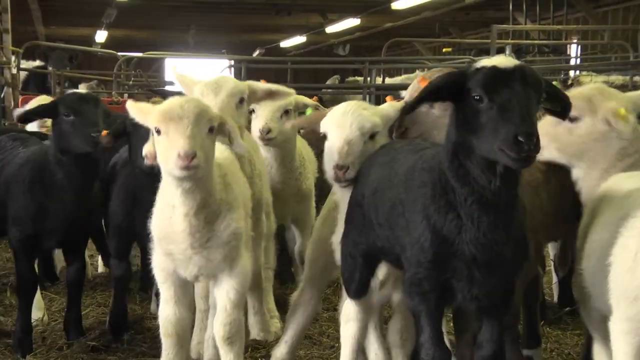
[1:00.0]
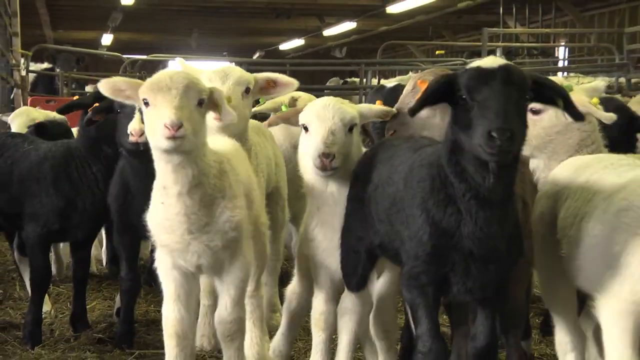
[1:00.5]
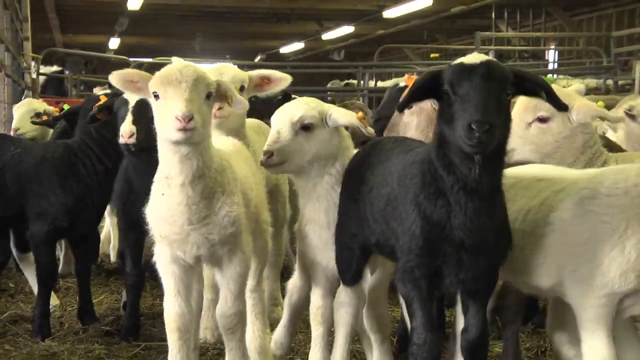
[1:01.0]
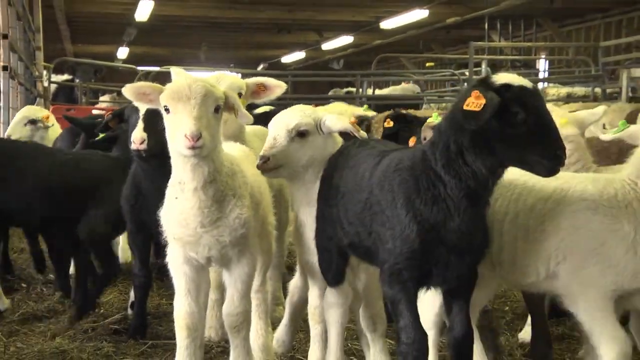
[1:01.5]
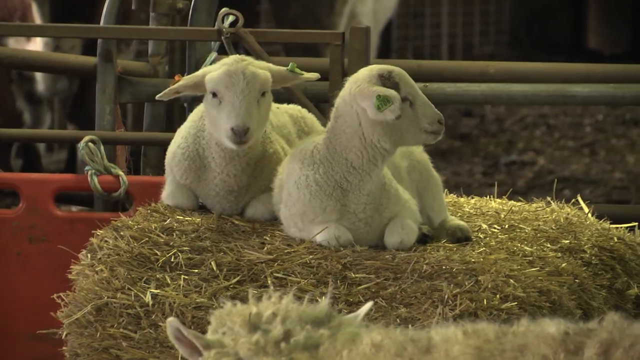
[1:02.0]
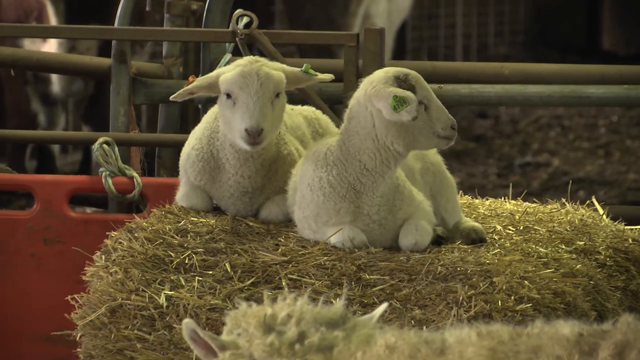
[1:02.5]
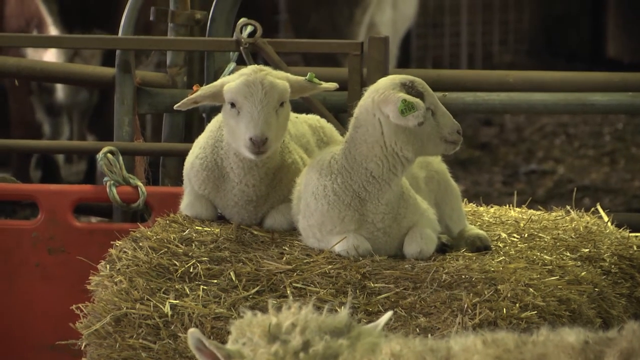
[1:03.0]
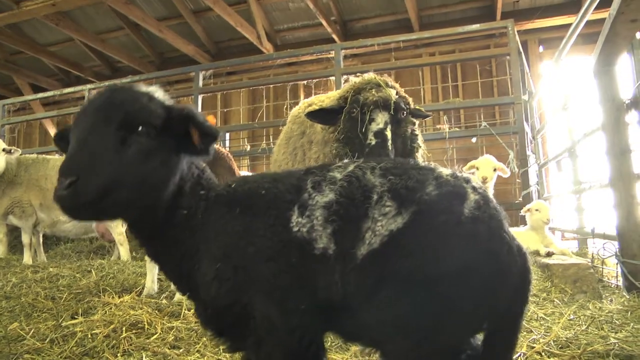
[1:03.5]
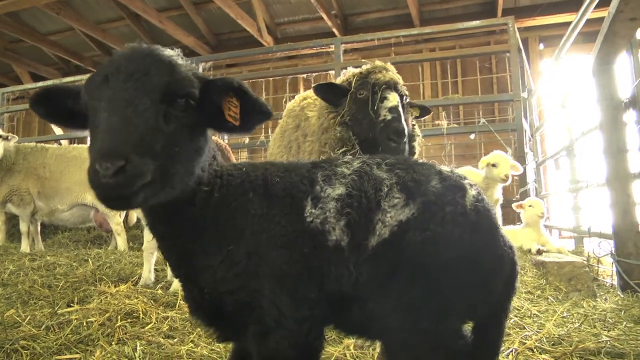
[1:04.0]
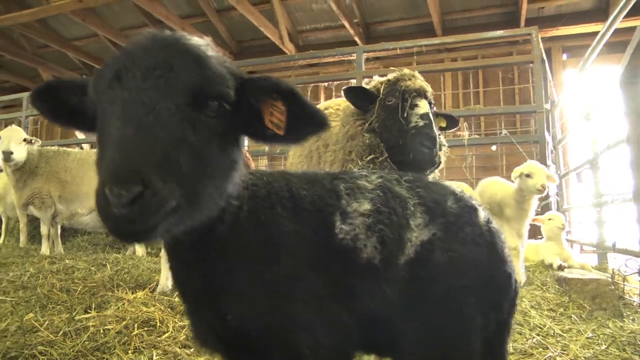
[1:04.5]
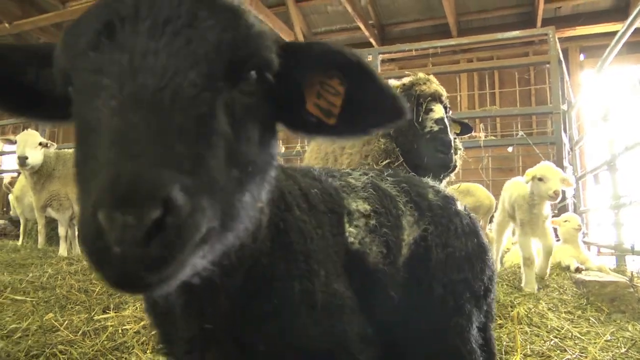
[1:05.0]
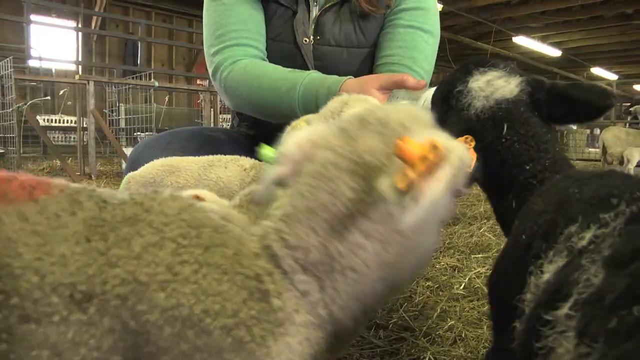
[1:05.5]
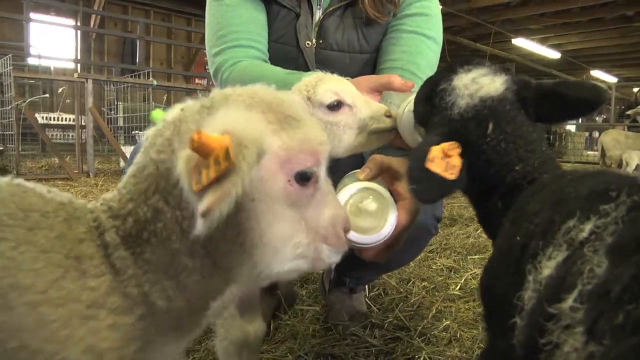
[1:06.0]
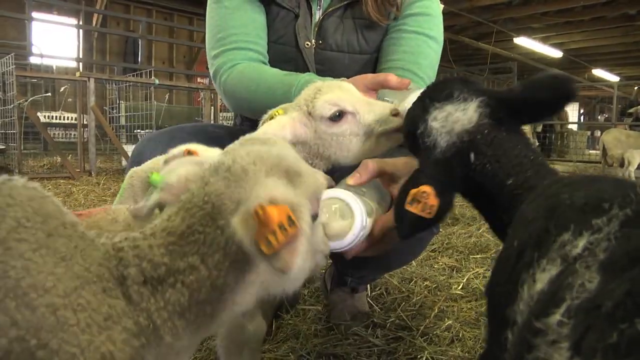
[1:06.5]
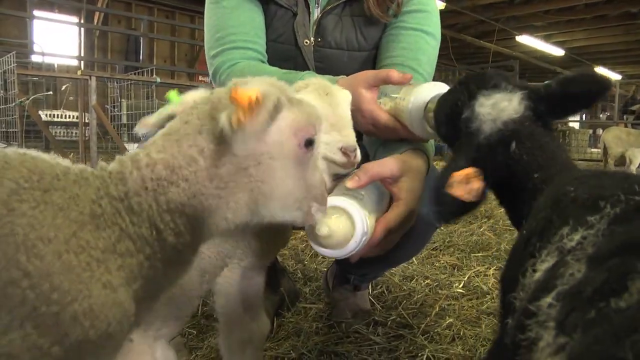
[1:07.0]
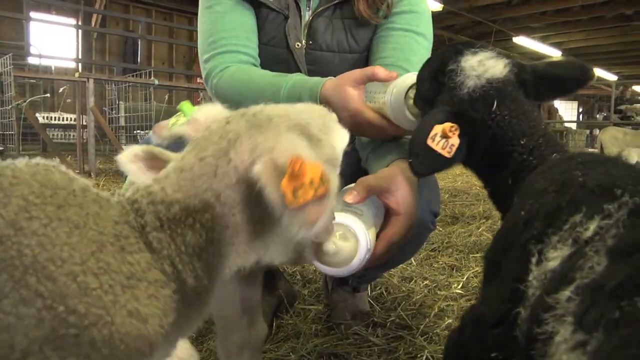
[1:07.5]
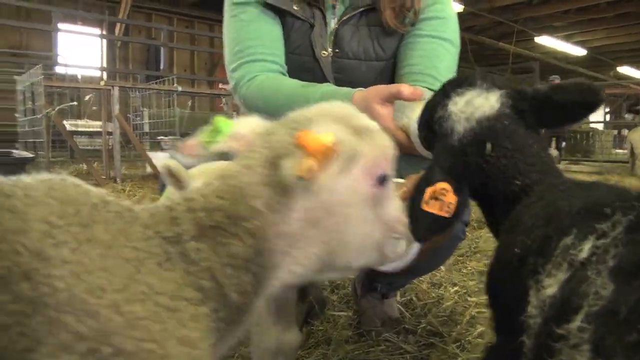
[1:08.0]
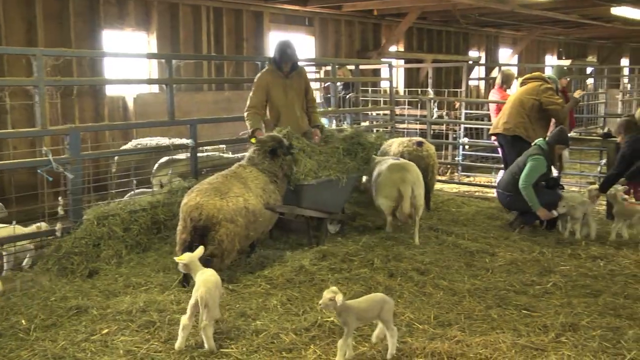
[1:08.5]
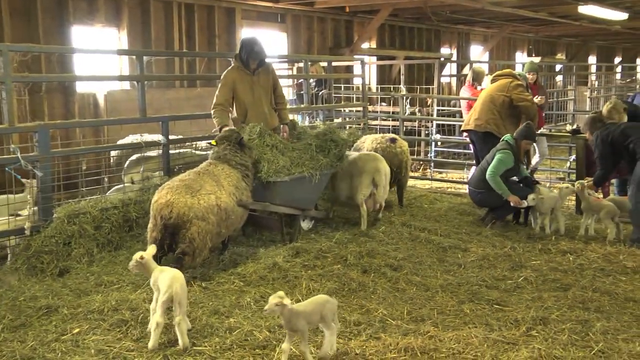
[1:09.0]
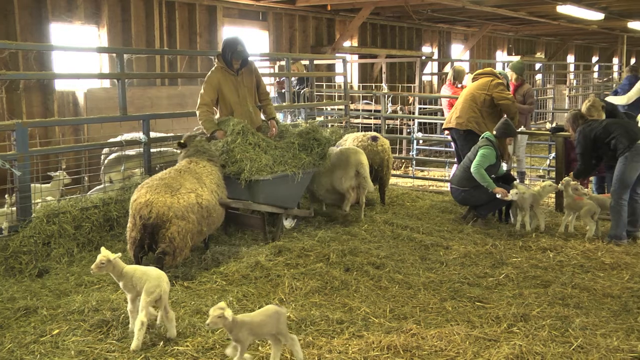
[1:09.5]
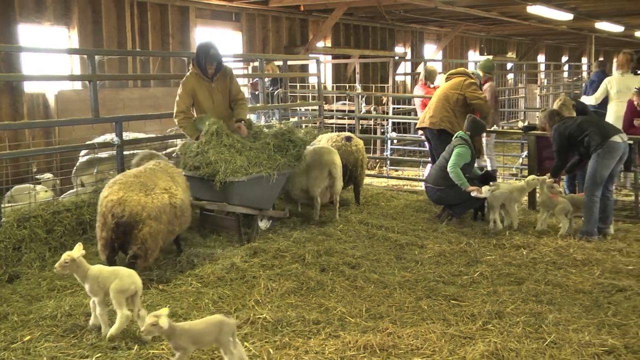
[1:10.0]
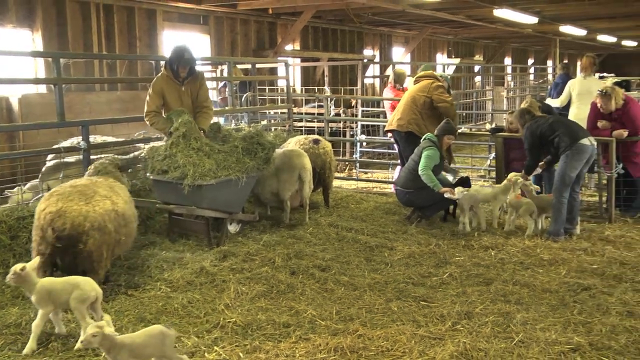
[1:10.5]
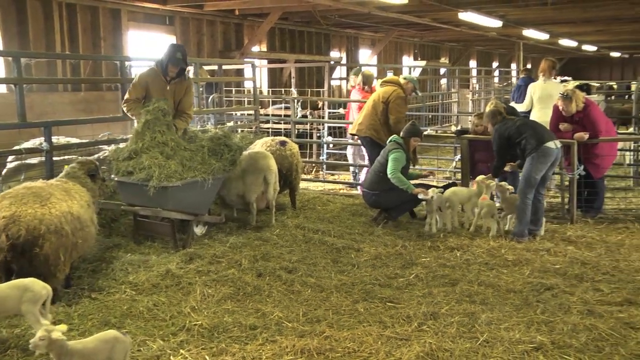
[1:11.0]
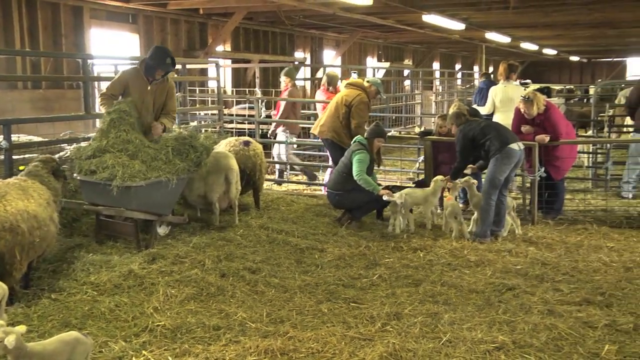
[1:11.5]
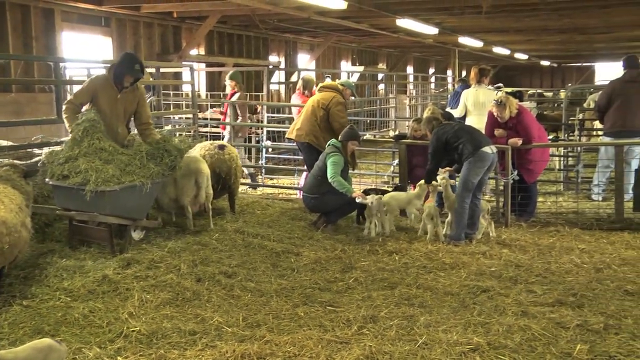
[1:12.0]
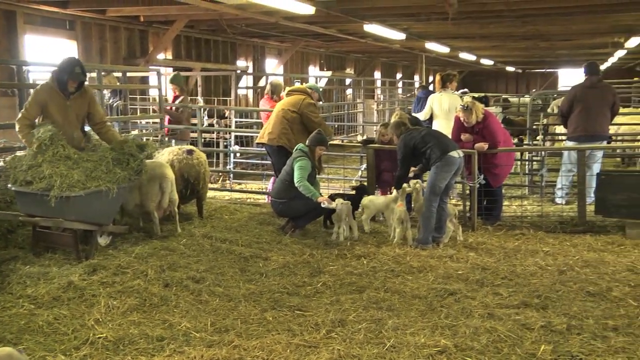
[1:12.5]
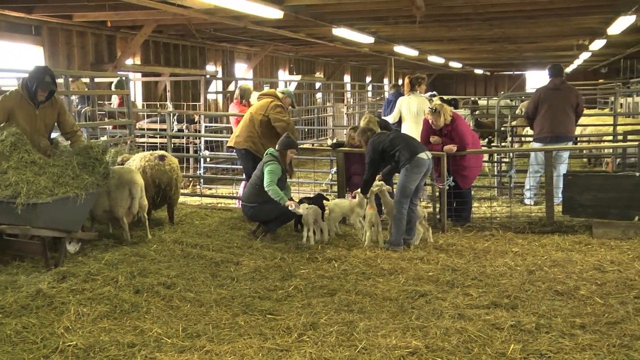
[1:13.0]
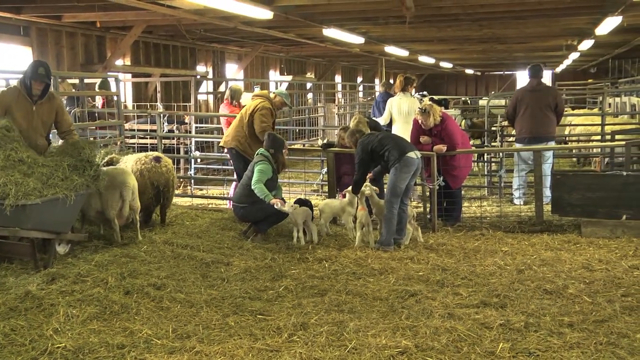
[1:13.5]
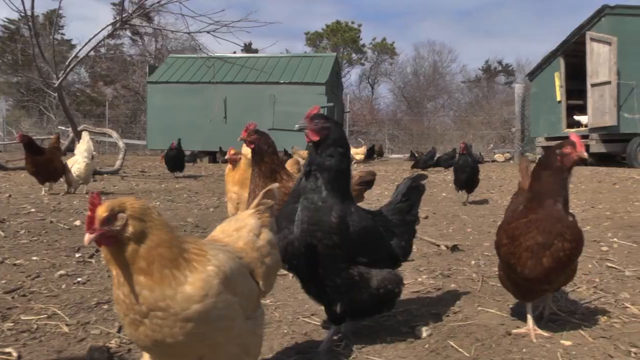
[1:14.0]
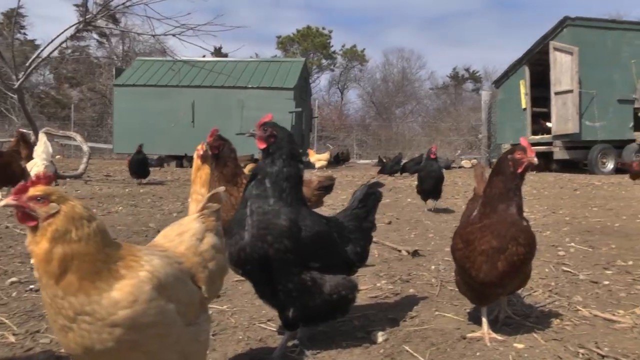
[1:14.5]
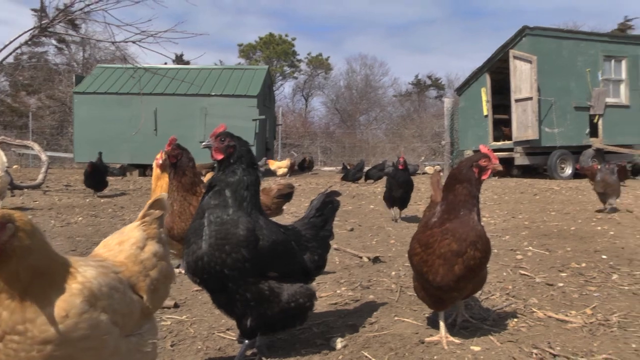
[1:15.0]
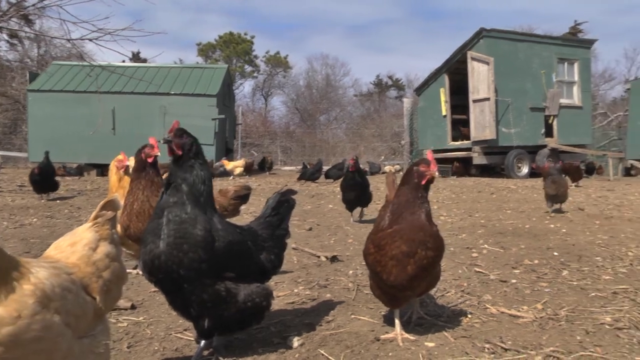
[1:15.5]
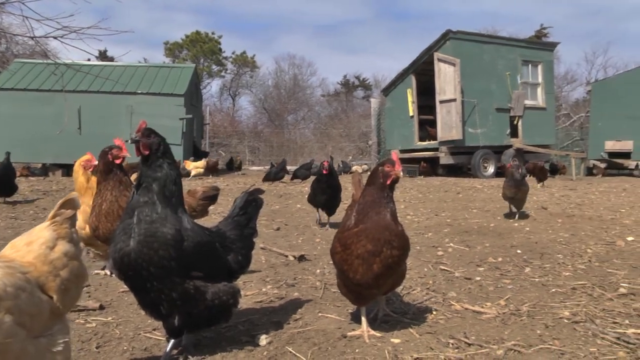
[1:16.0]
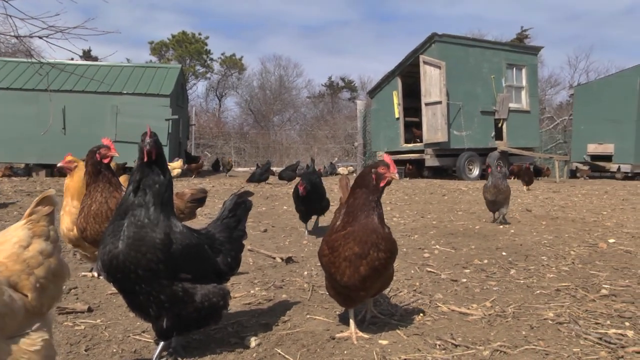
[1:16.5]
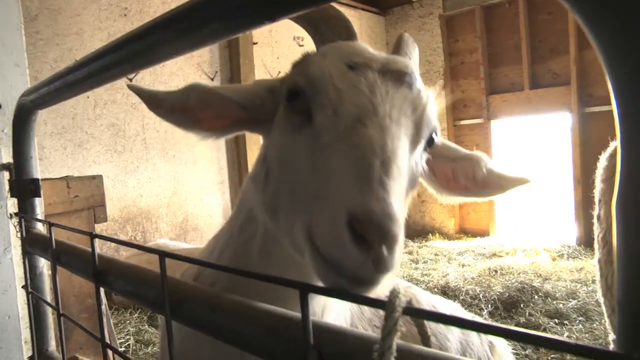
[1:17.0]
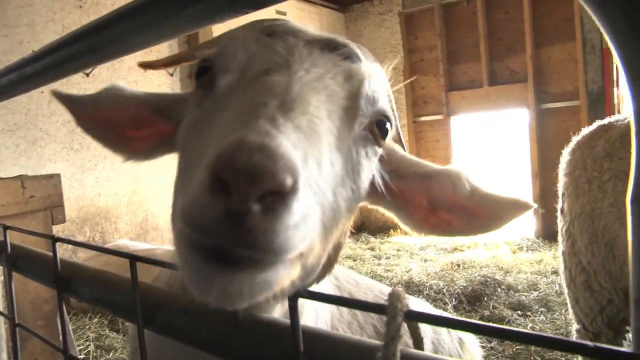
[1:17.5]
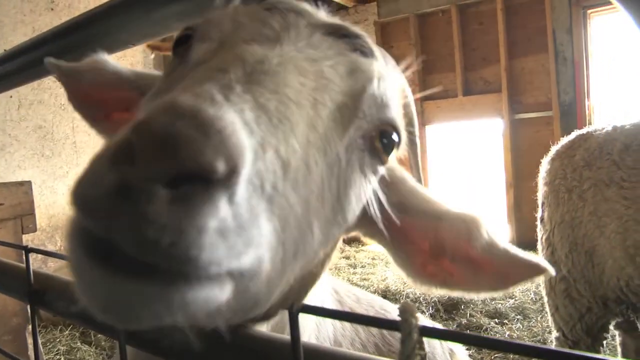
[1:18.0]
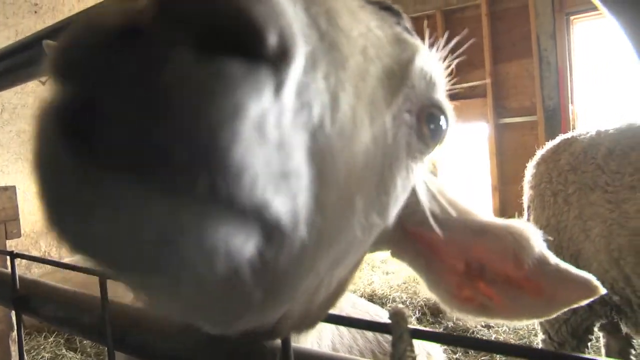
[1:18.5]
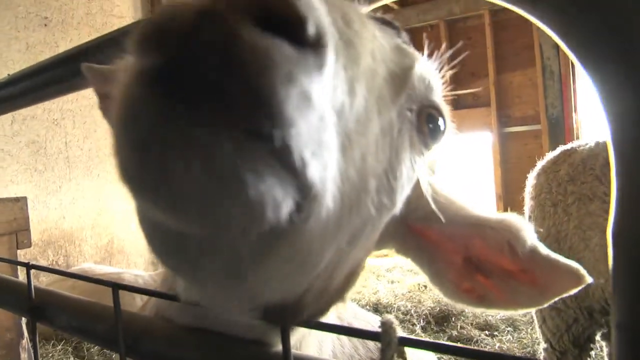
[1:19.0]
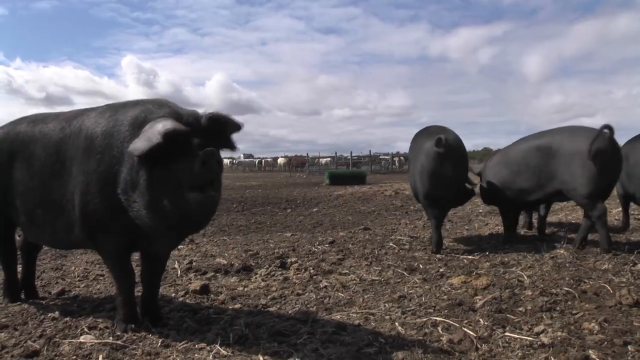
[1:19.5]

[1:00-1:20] A group of about 20 black and white lambs look closely and inquisitively at the camera. Two lambs sit on a bale of straw, looking very content. A mainly black lamb looks at the camera with a large sheep behind it and sniffs at the camera. A woman in a green jumper bends down, feeding the black lamb, which has a white spot on its head, with a bottle of milk while also feeding another lamb with a bottle. The camera pans round to a man in a brown jacket getting hay out of a wheelbarrow, surrounded by lambs. Lots of members of the public are looking around. An outside shot shows a close-up of some hens, and back inside the farm building a goat sniffs at the camera in close-up. The shot then changes to pigs in a field outside.